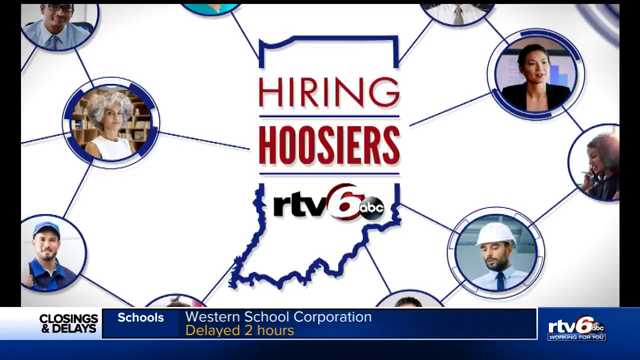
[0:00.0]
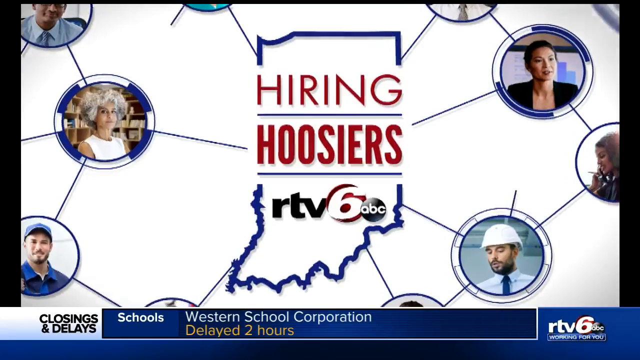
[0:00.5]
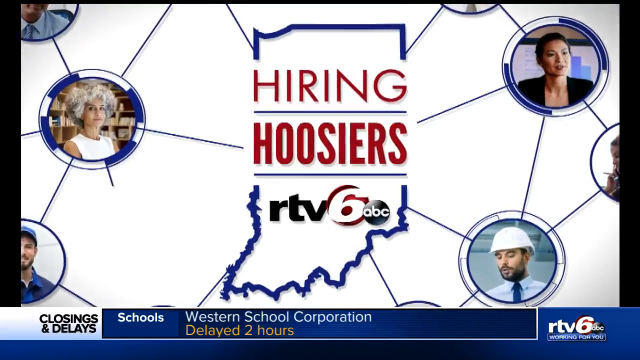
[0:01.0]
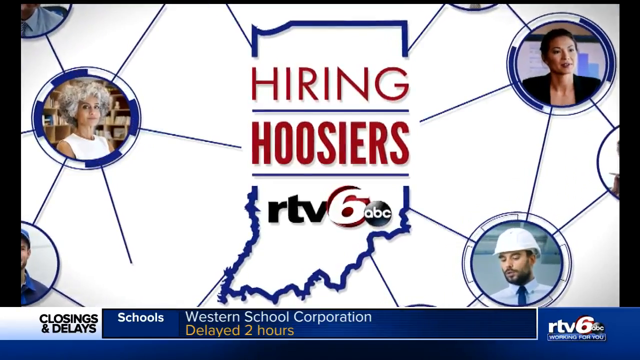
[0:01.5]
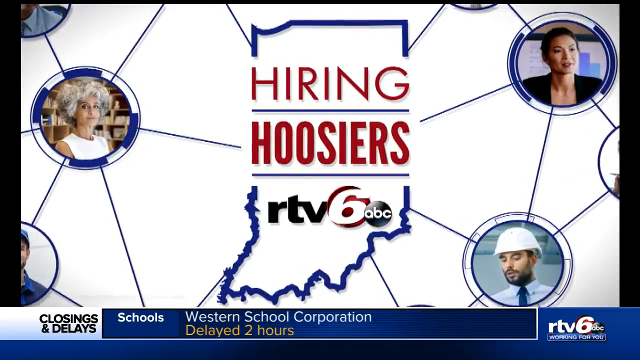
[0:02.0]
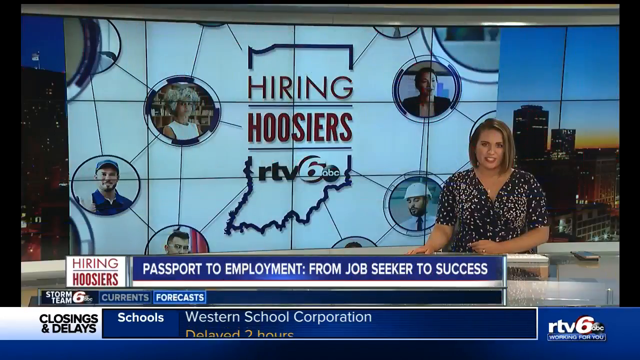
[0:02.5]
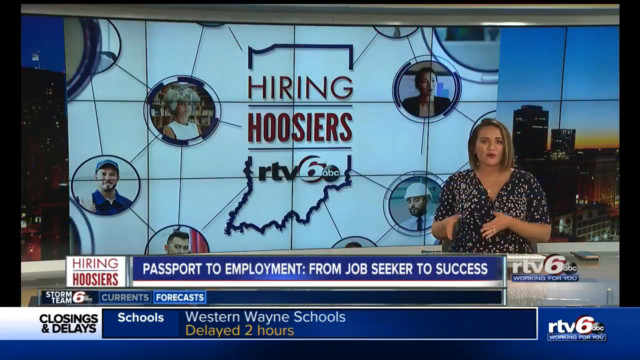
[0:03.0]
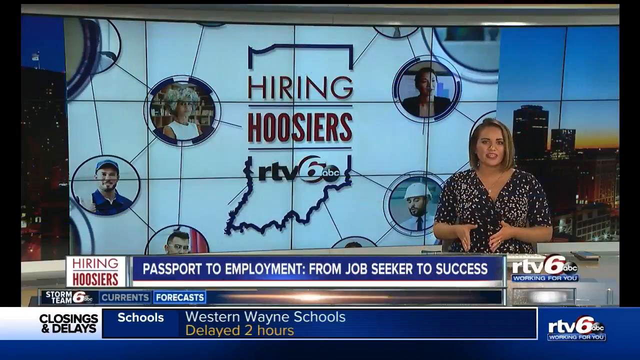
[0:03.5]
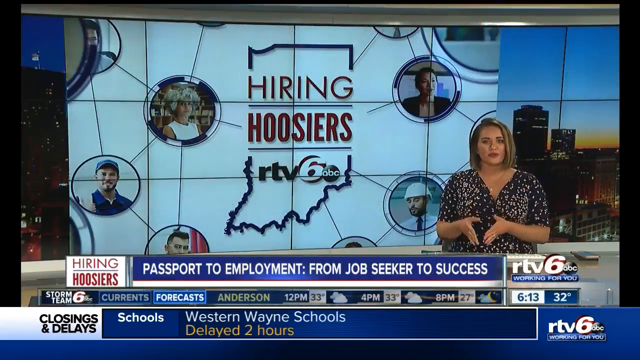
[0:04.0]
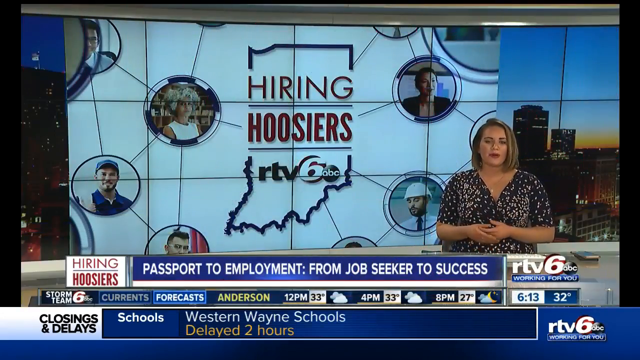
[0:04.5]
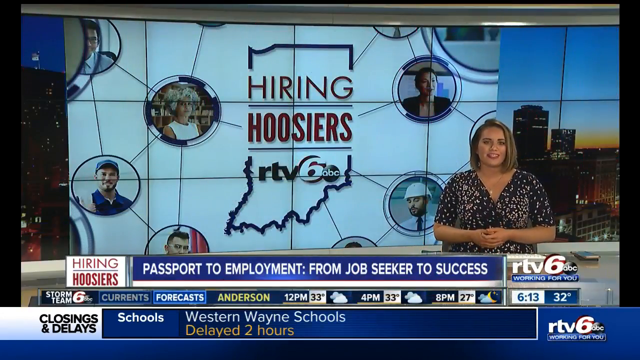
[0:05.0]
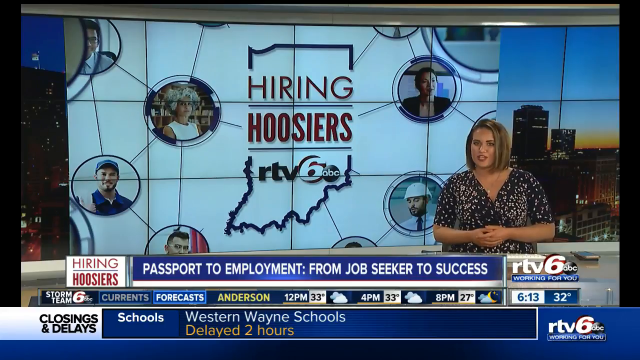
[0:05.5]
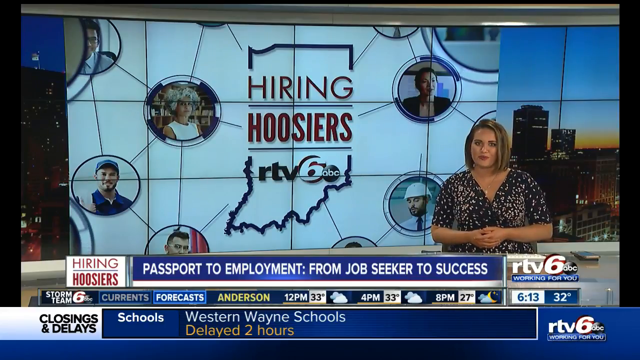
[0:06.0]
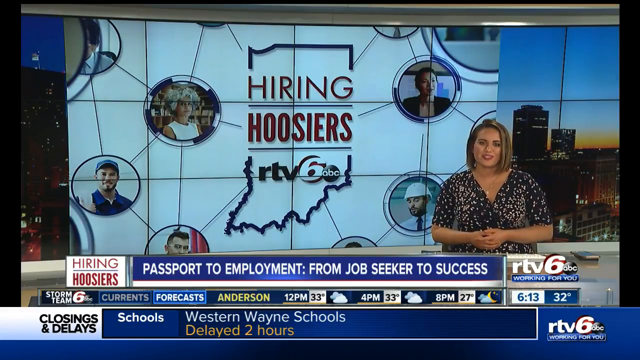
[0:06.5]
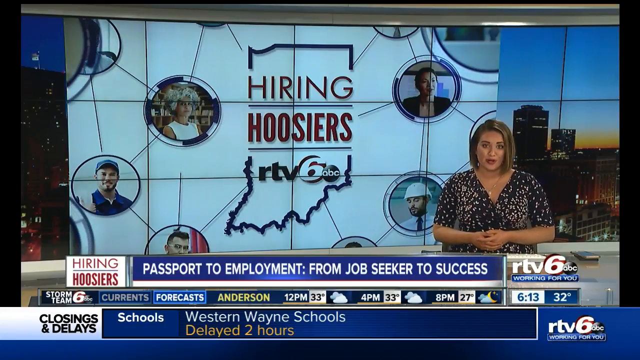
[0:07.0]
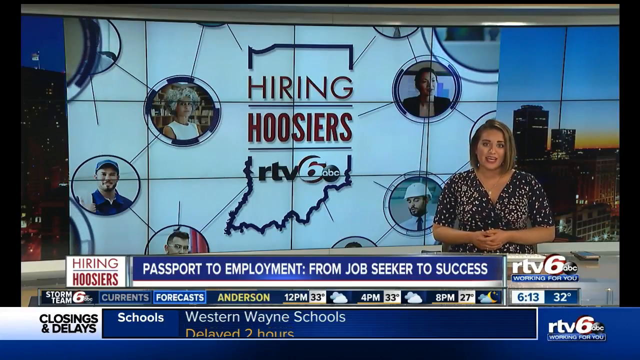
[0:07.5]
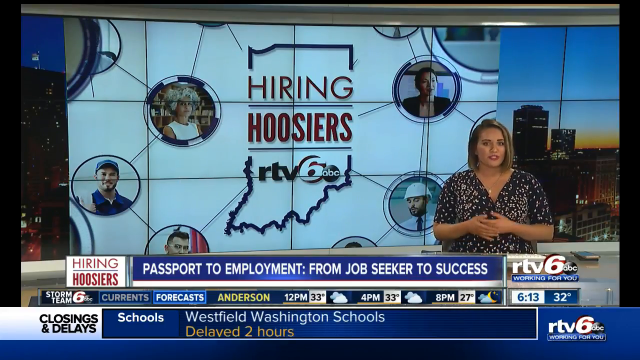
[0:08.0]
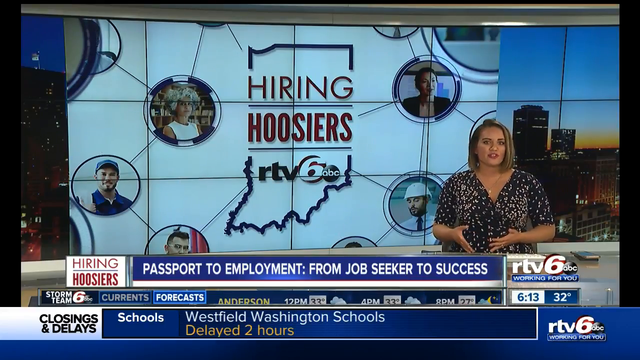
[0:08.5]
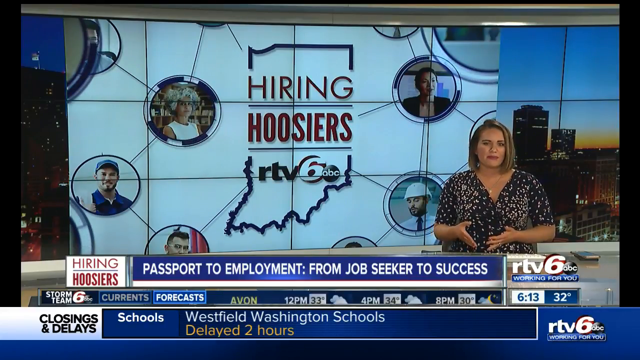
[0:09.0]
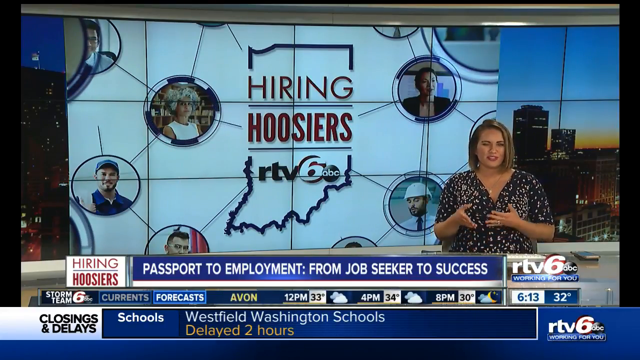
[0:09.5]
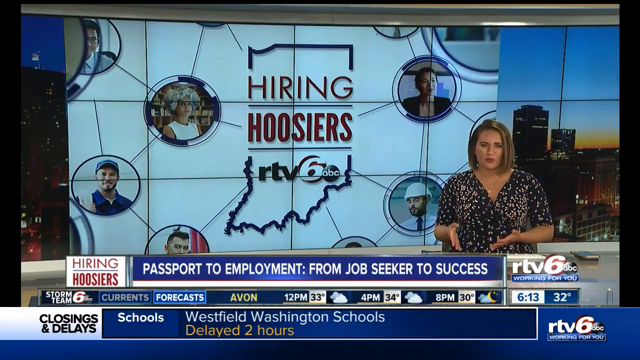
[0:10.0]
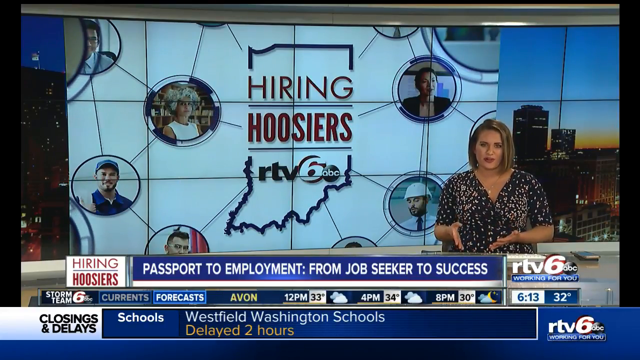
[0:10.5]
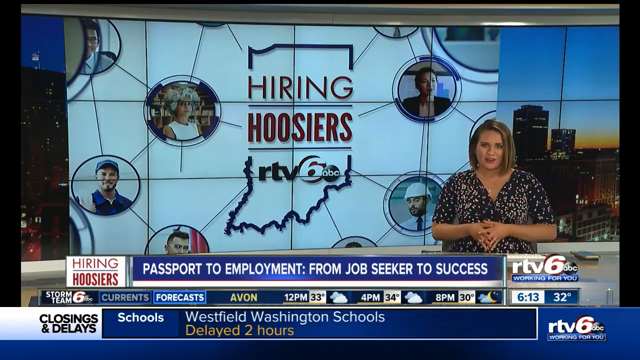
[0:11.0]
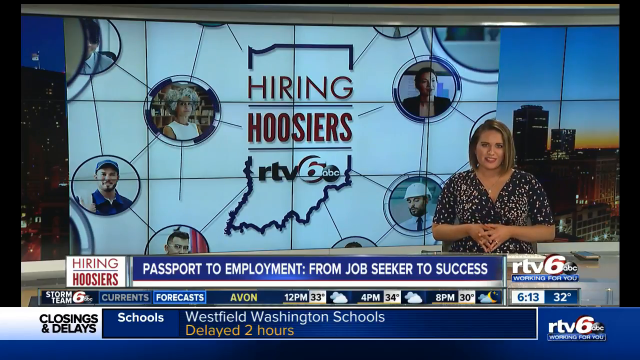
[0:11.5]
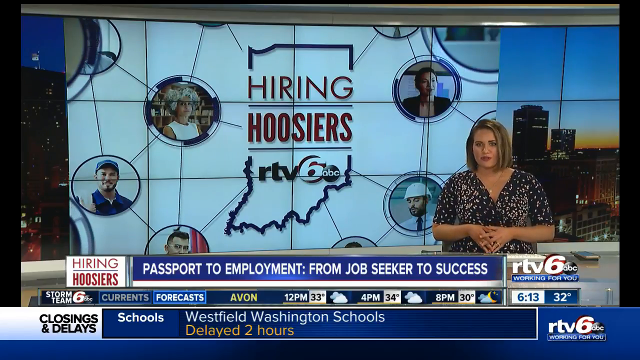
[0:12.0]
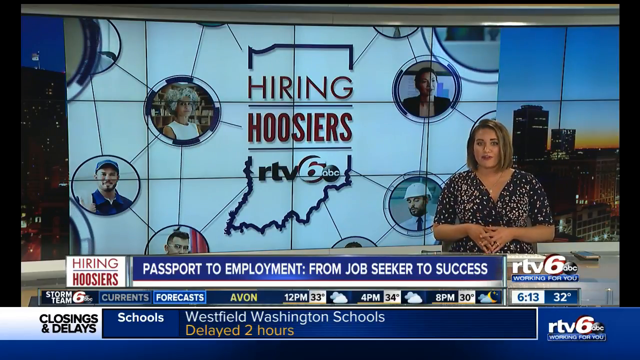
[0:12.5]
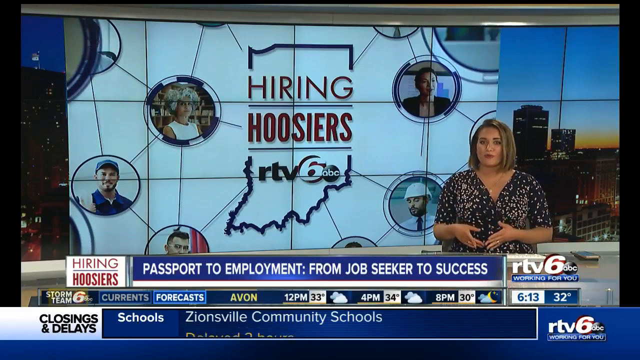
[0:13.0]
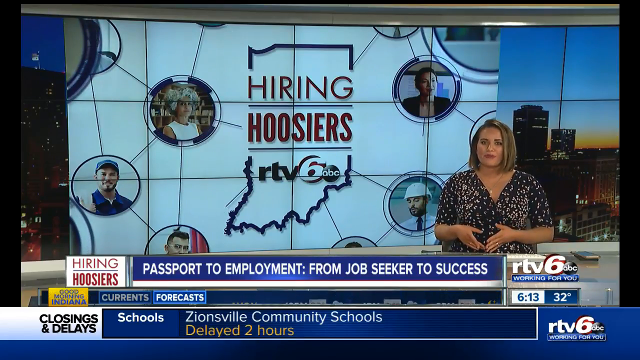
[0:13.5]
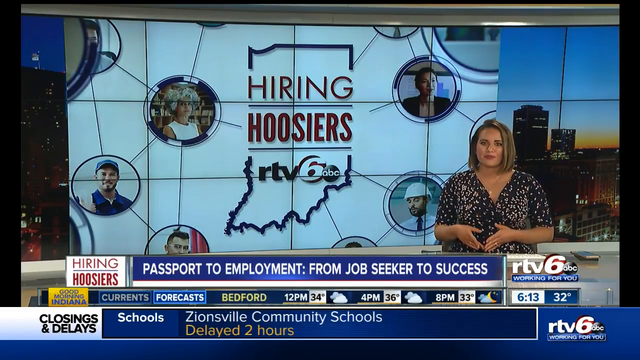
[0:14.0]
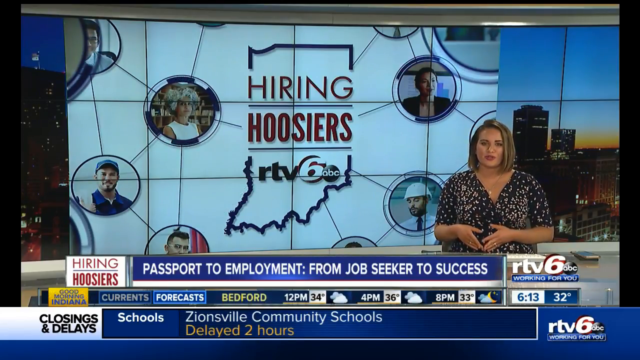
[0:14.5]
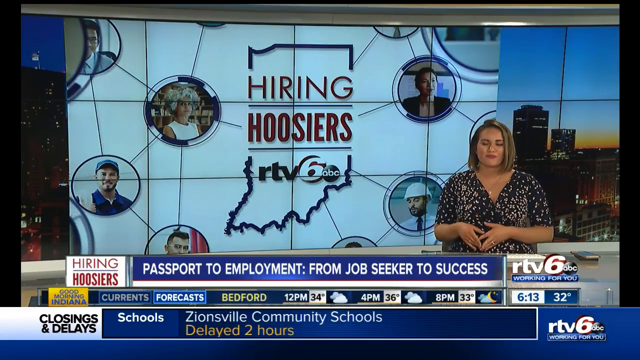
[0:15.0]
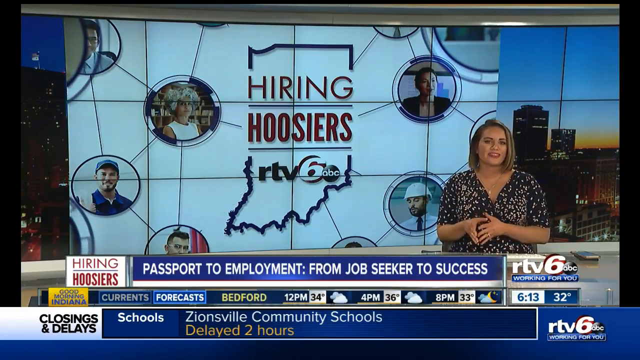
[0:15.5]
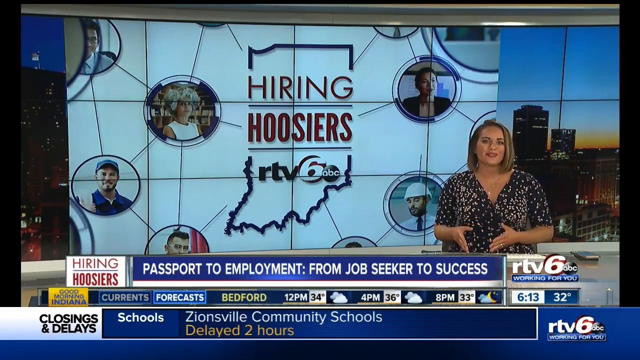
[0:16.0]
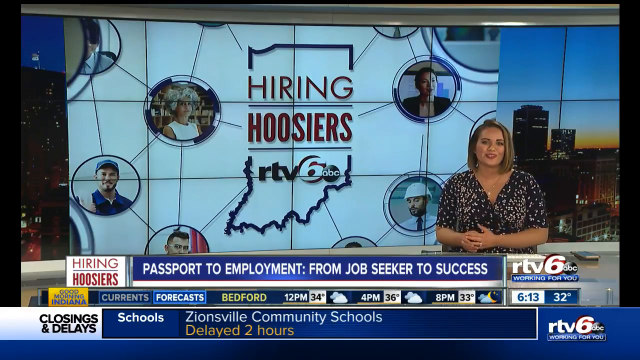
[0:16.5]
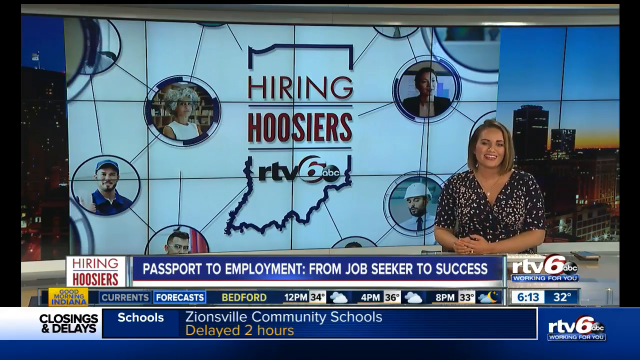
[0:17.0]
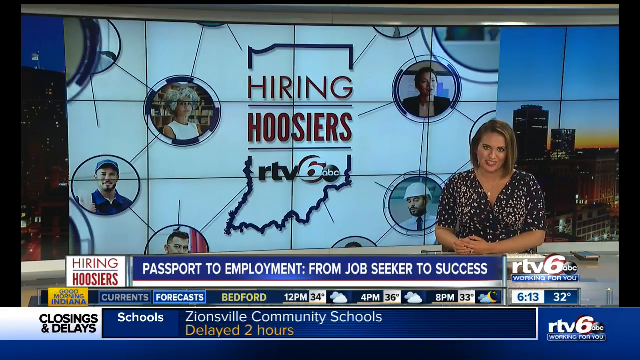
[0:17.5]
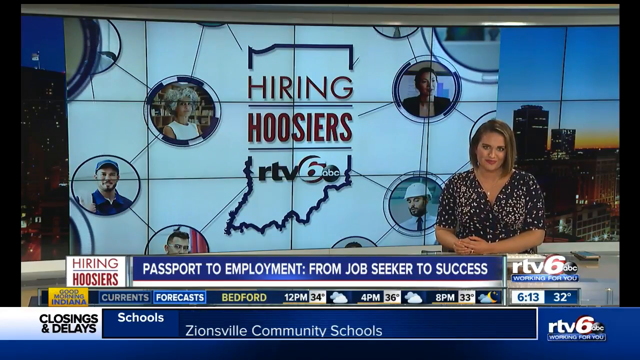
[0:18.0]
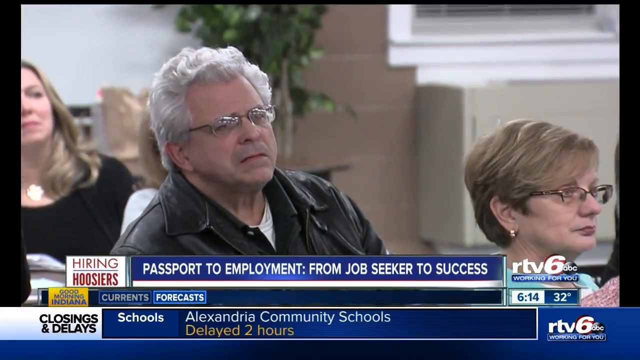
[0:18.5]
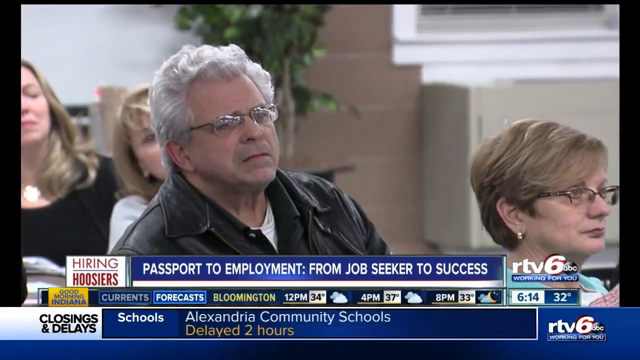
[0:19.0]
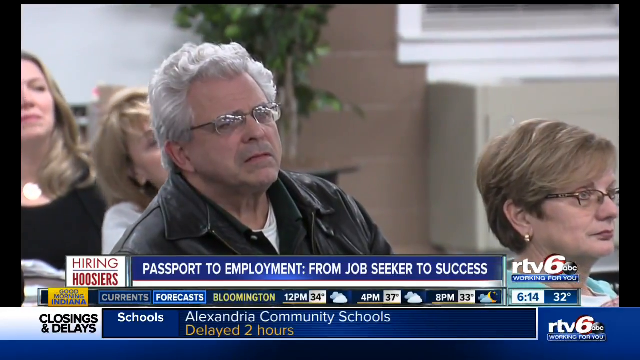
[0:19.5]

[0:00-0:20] The video opens with "Hiring Hoosiers" in bold red print, with "RTV6ABC" underneath. The border around "Hiring Hoosiers" is in the shape of the State of Indiana. Many different people appear in circles that look like life savers, all connected to each other with lines. A female newscaster with blunt, chin-length hair sits at the desk at RTV6. Below her, "Hiring Hoosiers" appears in red print, next to a blue box with bold white text reading "Passport to Employment from Job Seeker to Success". Underneath all of this, a ticker runs through school closings and the weather.